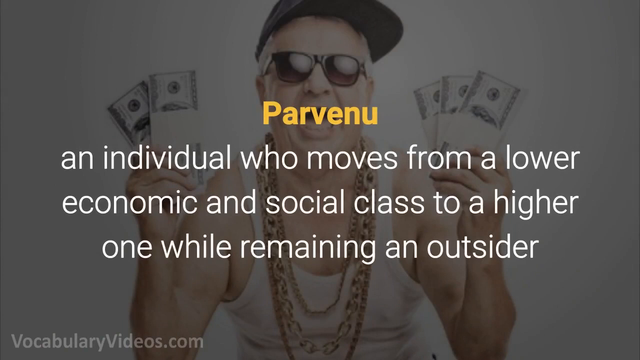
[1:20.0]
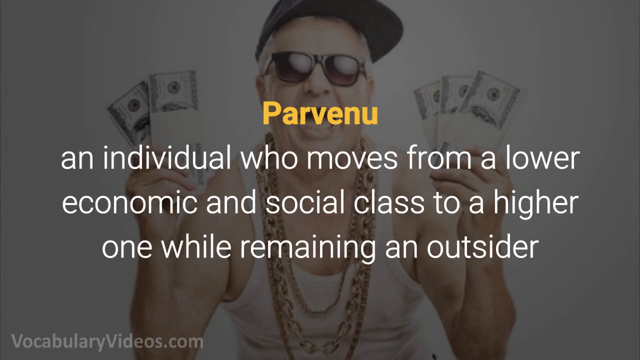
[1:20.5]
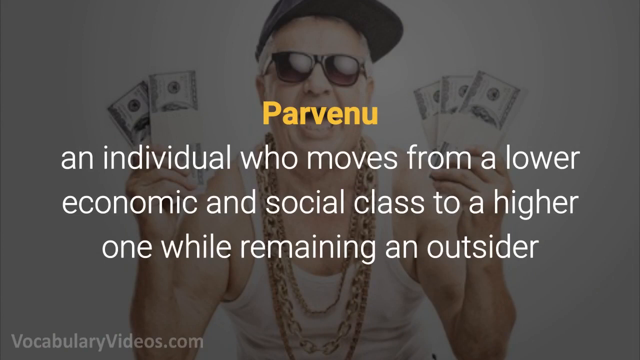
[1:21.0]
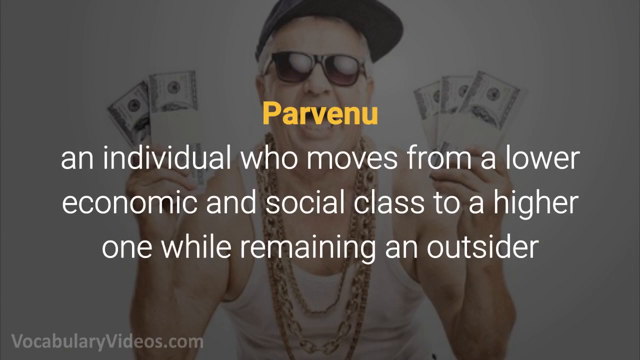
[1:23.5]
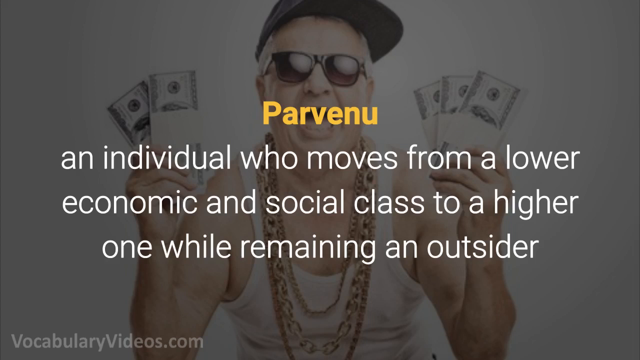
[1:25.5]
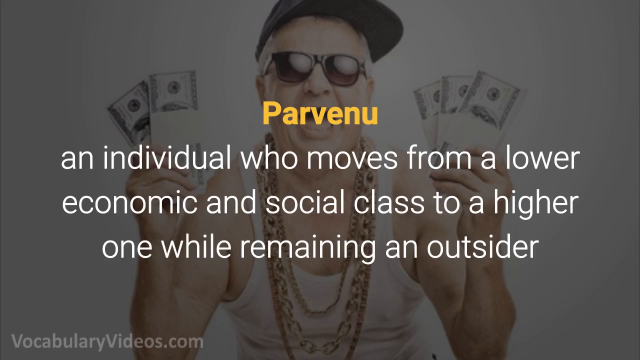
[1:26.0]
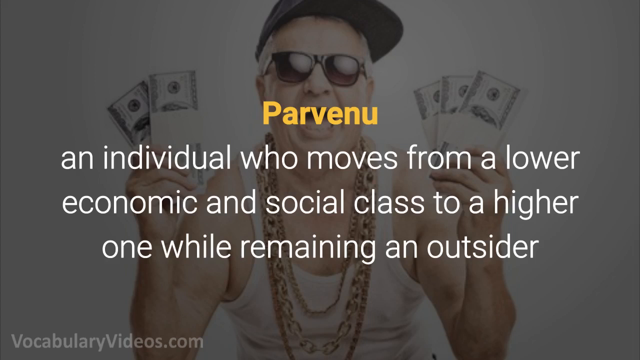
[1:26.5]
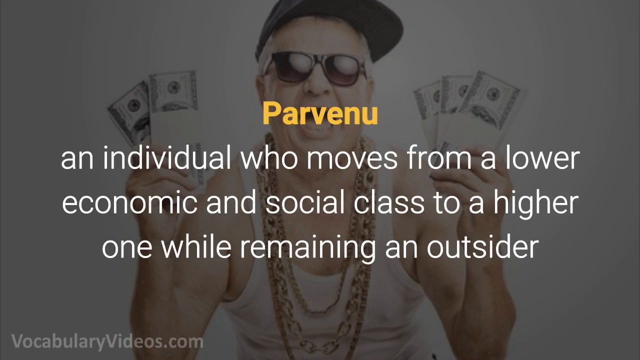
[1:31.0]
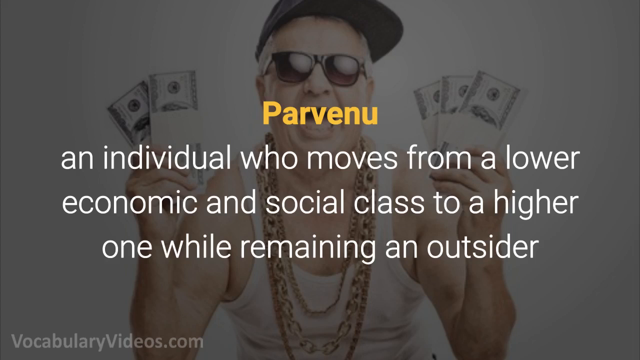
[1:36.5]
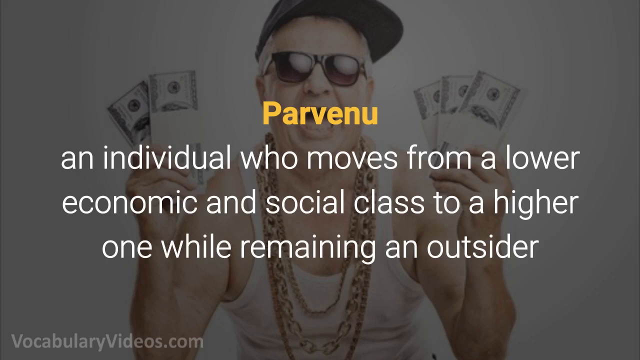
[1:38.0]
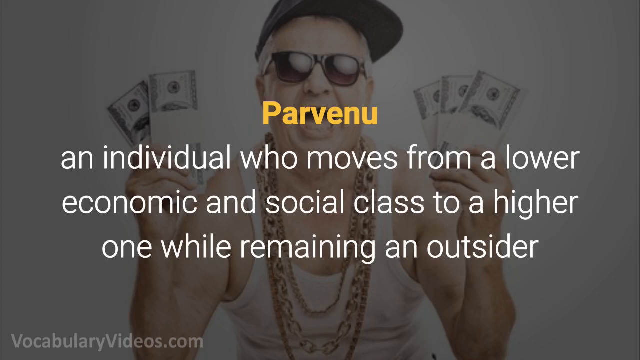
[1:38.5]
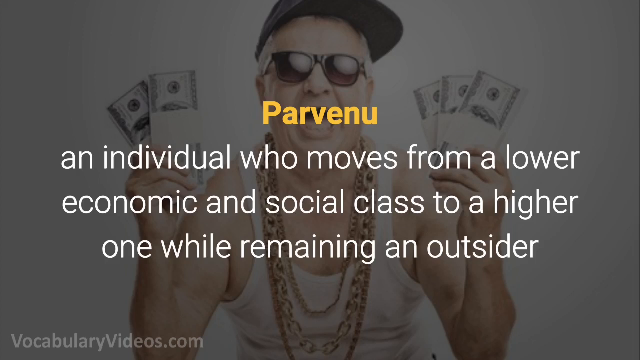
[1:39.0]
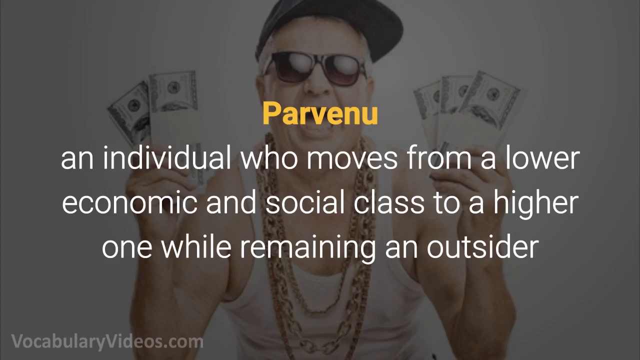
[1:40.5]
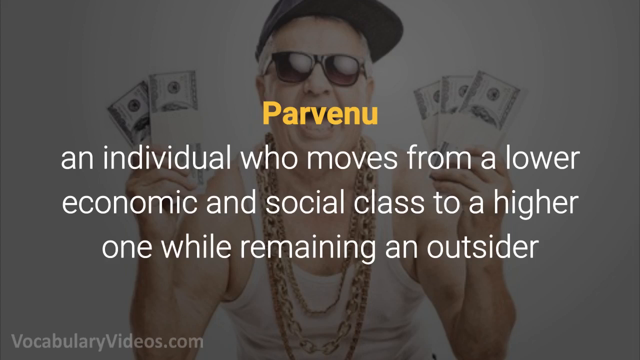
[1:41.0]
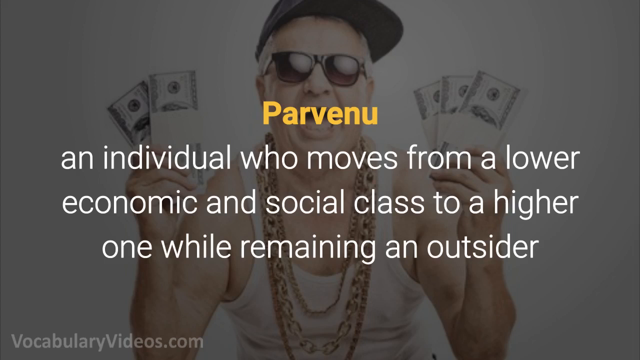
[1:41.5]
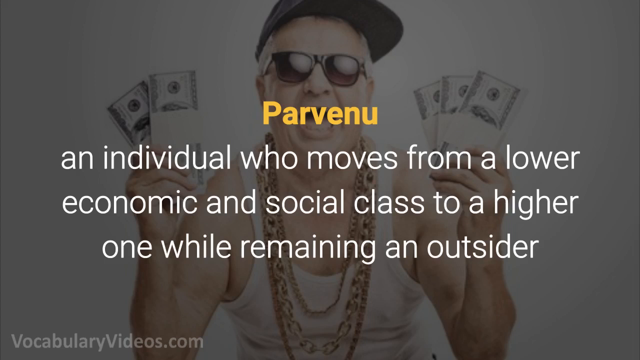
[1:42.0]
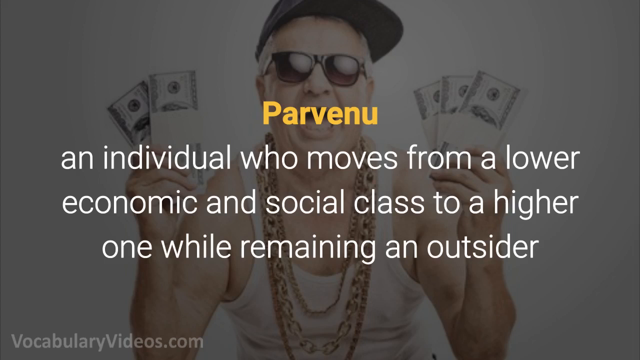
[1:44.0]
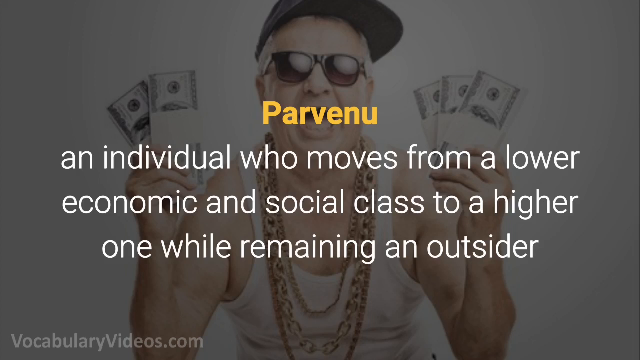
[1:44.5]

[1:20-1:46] In the final part of the tutorial, the word parvenu is again spelled P-A-R-V-E-N-U and defined as an individual who moves from a lower economic and social class to a higher one, crucially while remaining an outsider.